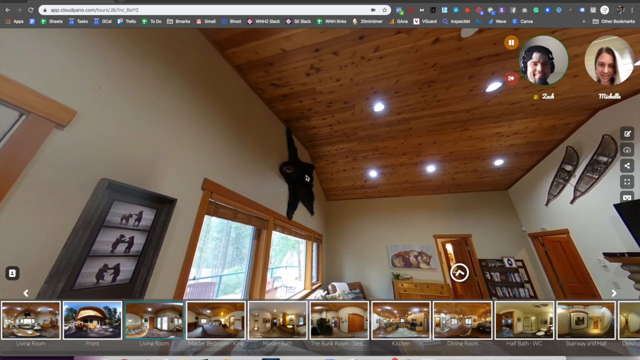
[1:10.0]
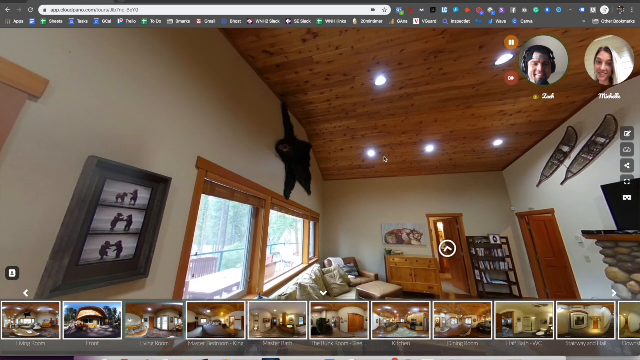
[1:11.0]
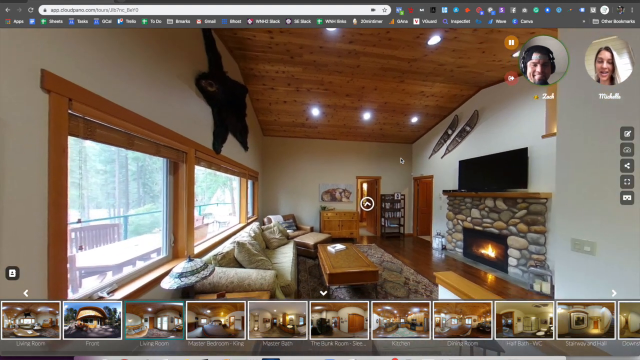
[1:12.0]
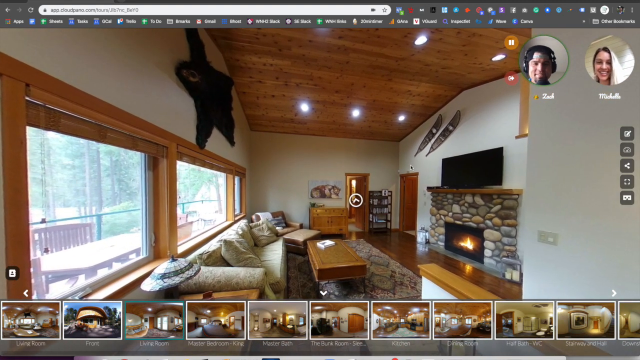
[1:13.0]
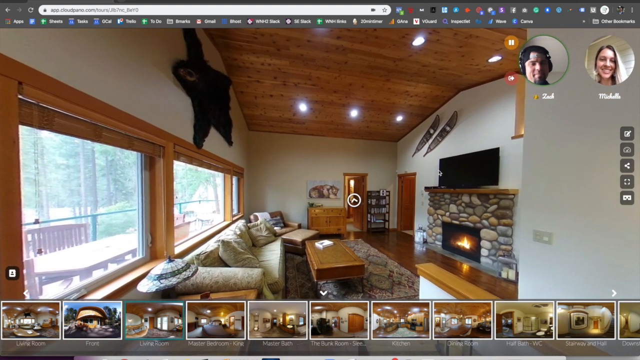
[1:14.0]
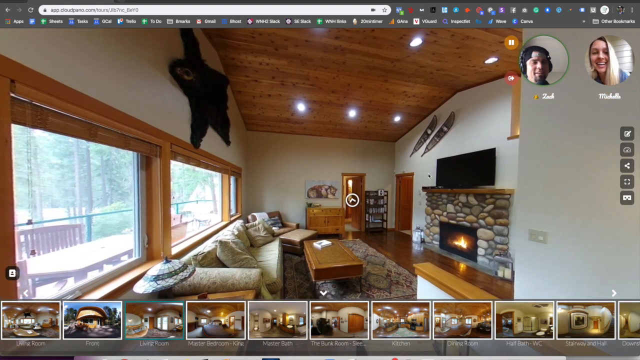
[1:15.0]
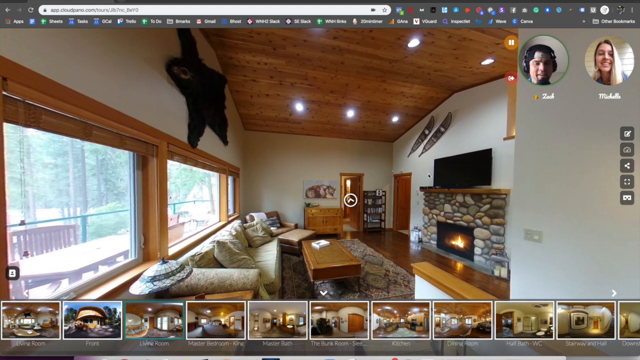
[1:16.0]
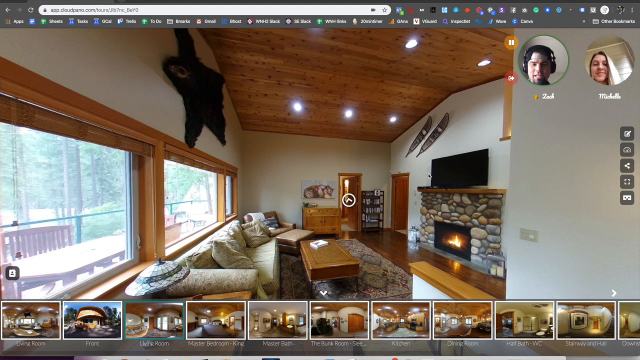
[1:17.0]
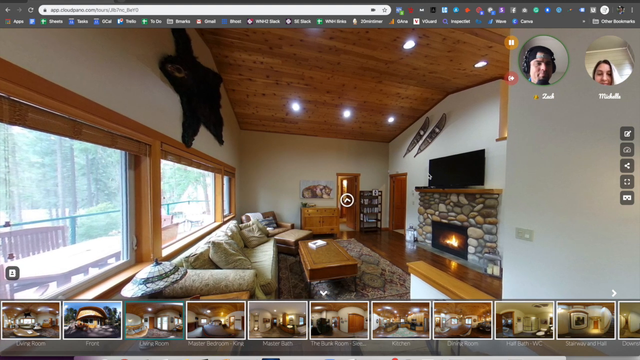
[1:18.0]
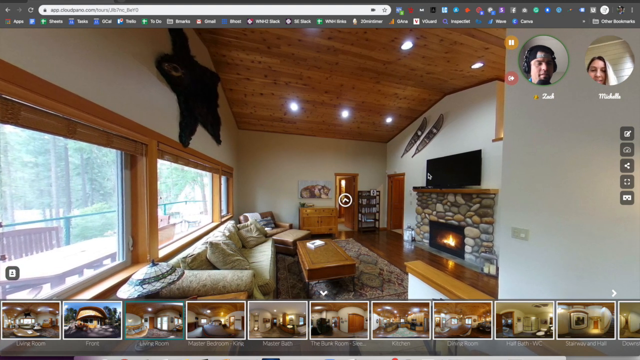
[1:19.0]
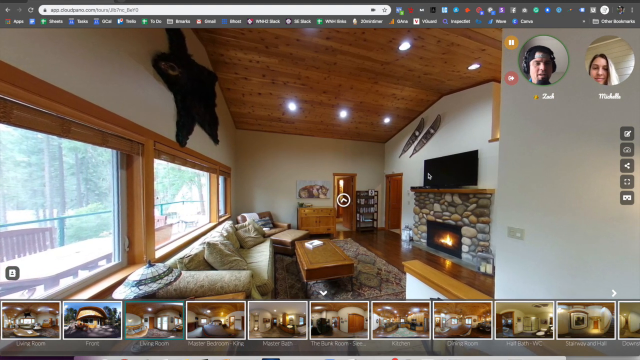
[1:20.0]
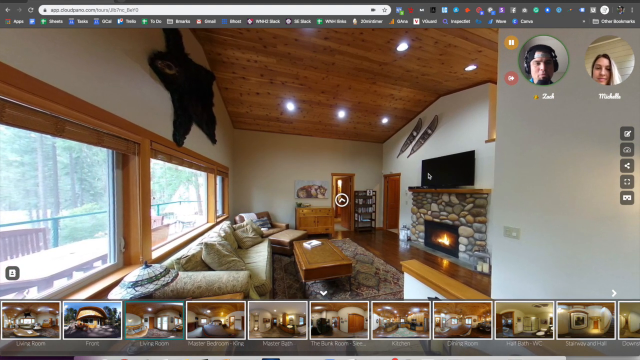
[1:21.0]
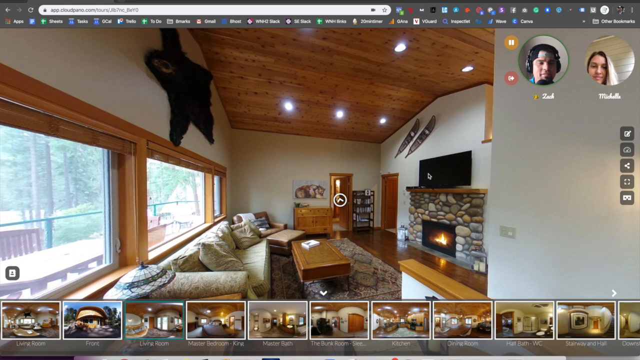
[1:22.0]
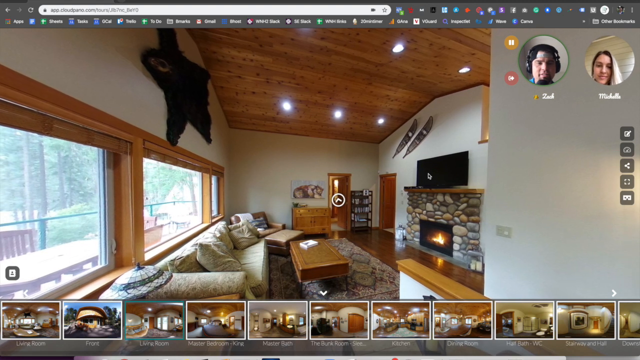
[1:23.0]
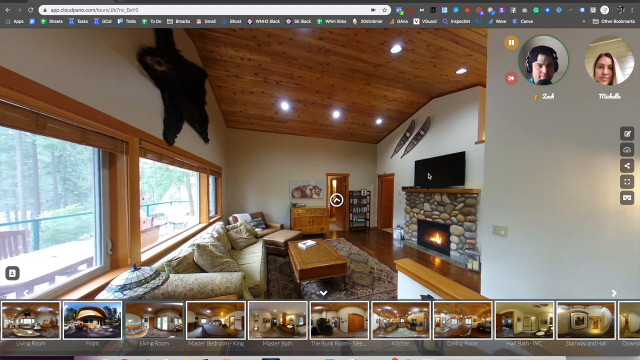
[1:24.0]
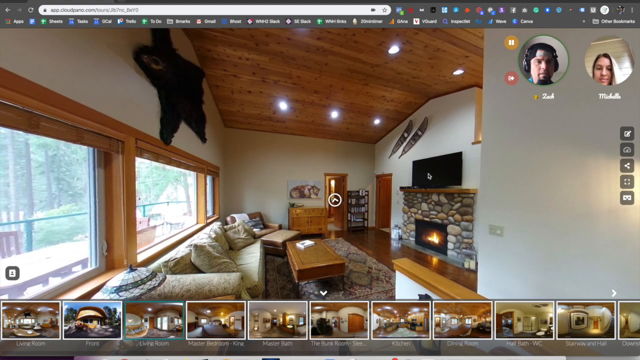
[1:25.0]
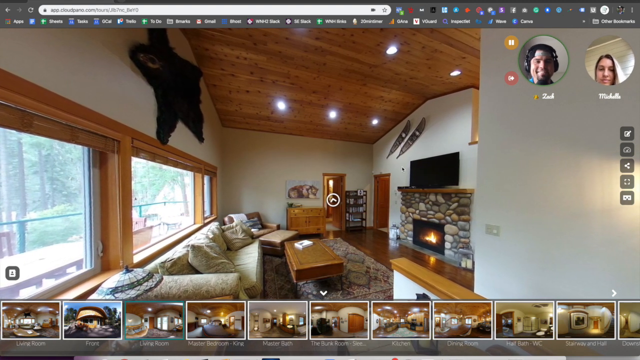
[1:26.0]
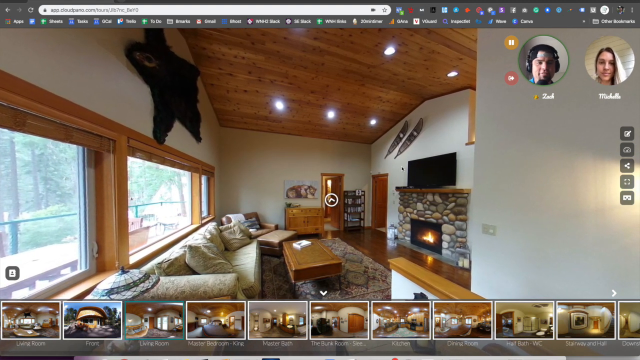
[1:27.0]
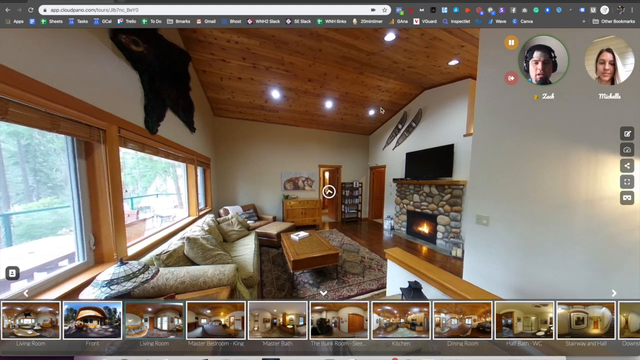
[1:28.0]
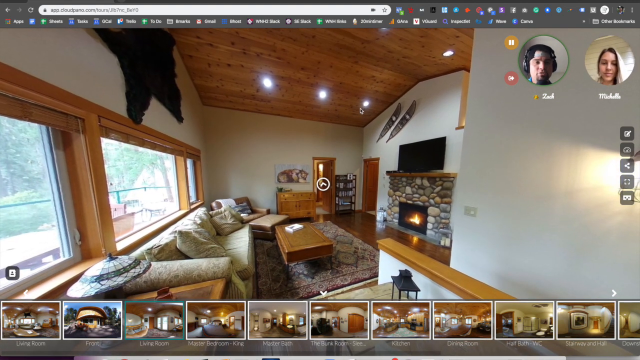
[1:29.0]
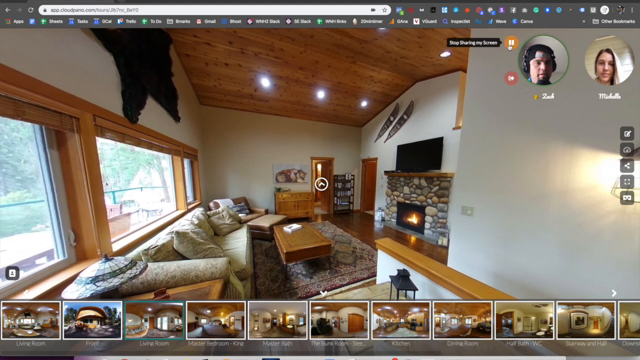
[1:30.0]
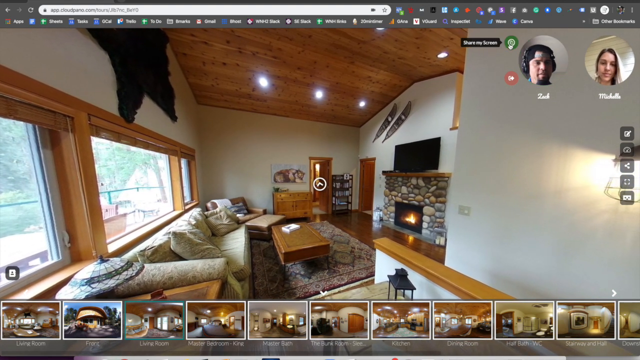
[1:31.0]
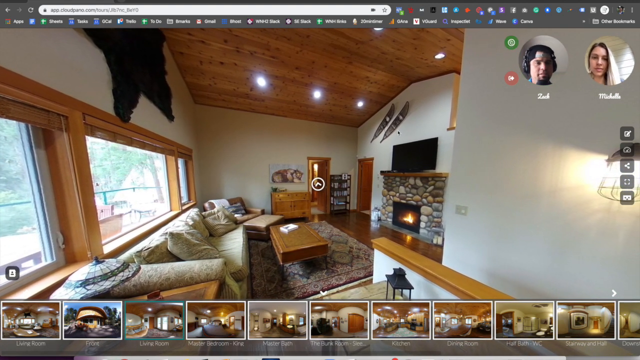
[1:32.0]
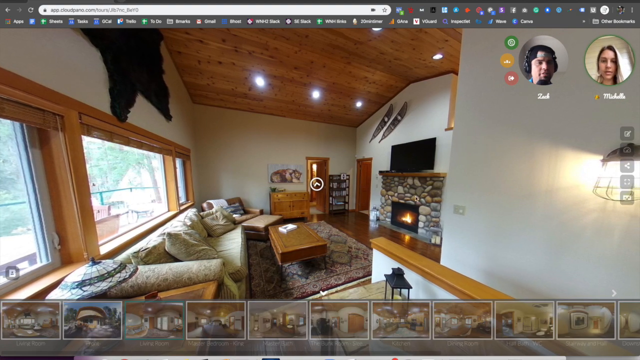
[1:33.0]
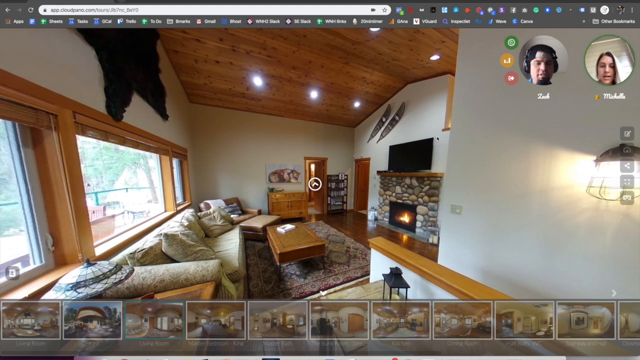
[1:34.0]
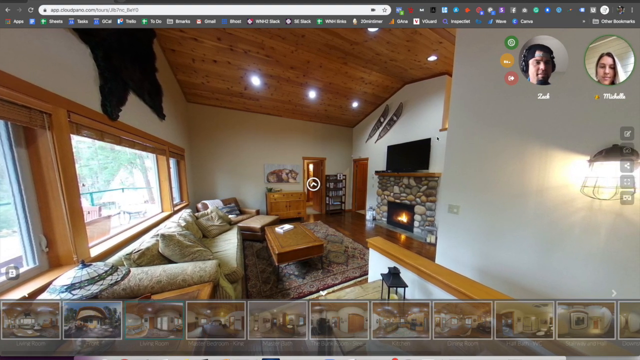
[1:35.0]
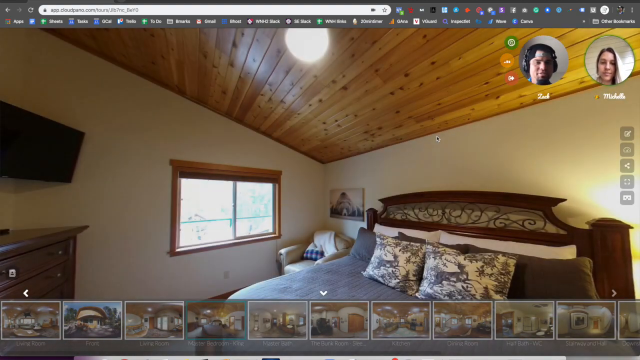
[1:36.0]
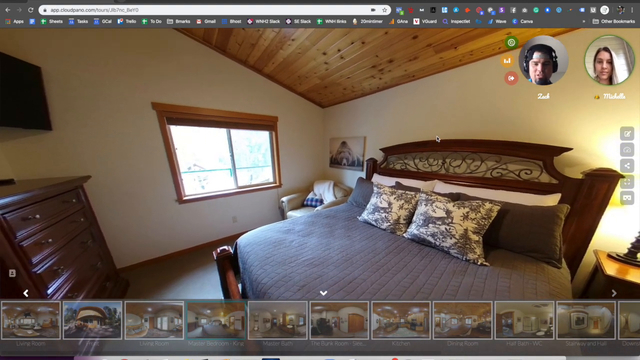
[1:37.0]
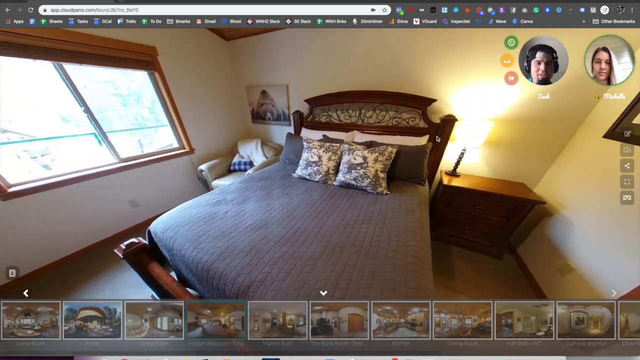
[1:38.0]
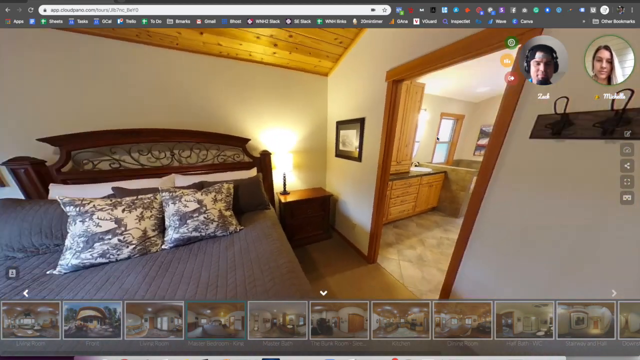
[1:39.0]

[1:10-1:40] Pictures of the two virtual reality players are shown in two circles, one on the left and one on the right, in the upper right-hand corner. The man's name is listed under him in white print as Zach, and the girl is listed as Michelle. They are smiling and talking: her head turns slightly, his head turns, and their mouths open and shut. A den inside the house is shown, with a fire going in the background and a black, rectangular flat screen TV above the fireplace. The screen kind of goes blank for a moment, and then a bedroom appears that looks like it is upstairs. The bedroom has an attached bathroom and the same decor, with a lot of wood. The bedspread is gray with matching pillows, and there are areas to hang clothes on the wall to the right.